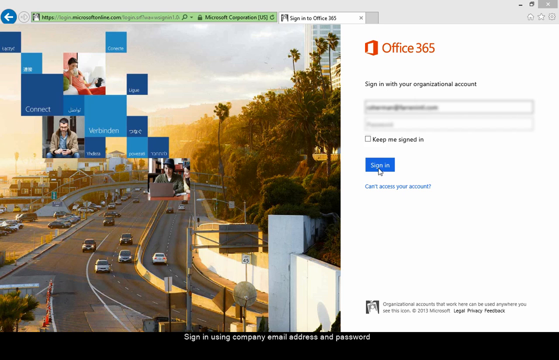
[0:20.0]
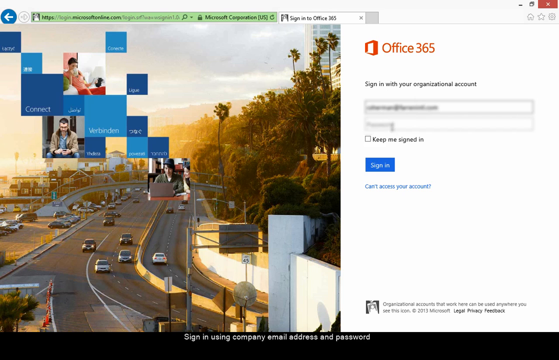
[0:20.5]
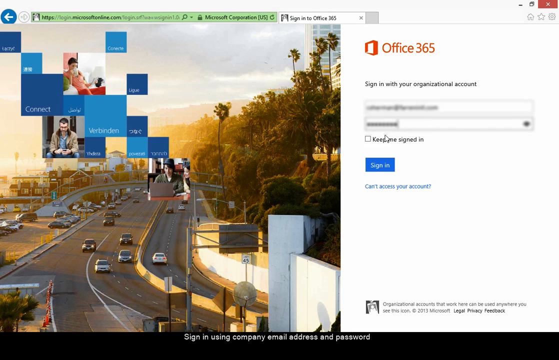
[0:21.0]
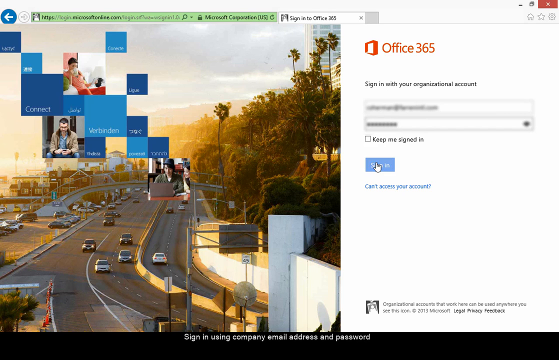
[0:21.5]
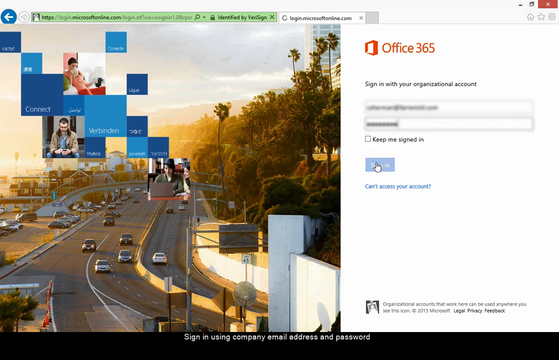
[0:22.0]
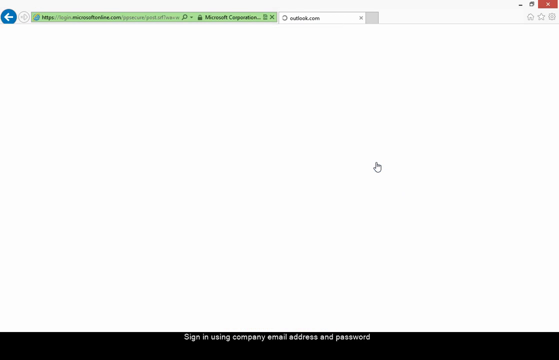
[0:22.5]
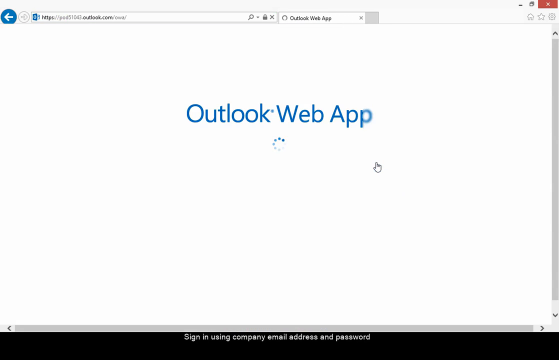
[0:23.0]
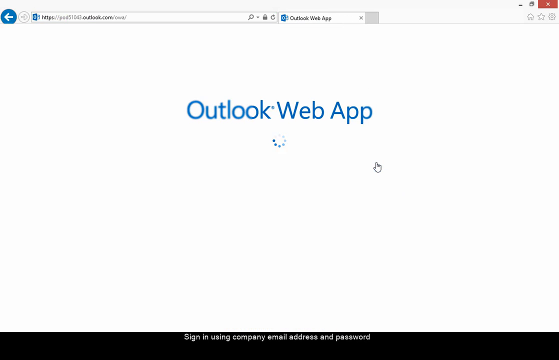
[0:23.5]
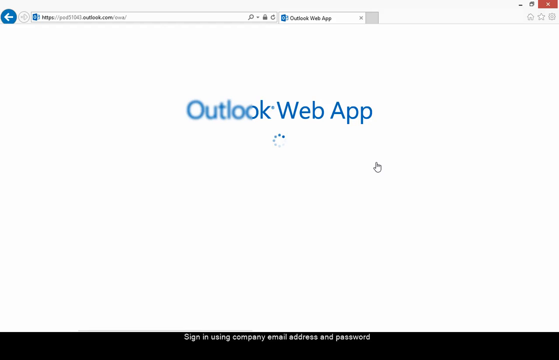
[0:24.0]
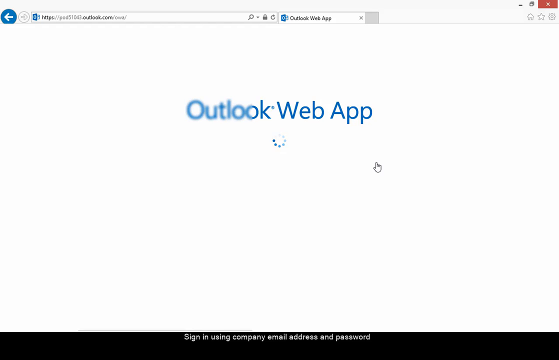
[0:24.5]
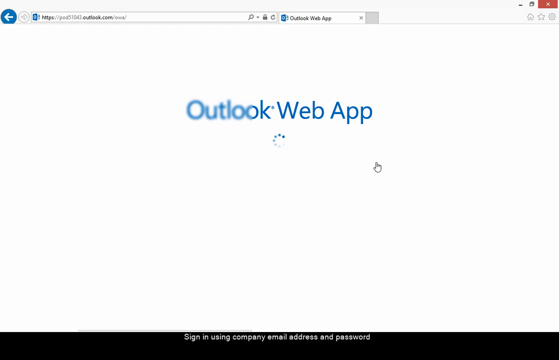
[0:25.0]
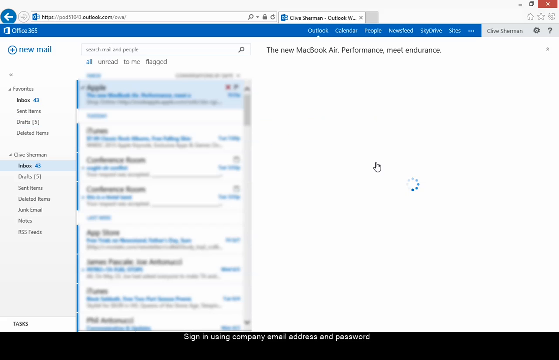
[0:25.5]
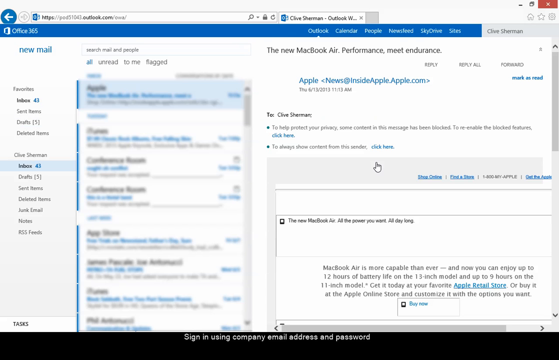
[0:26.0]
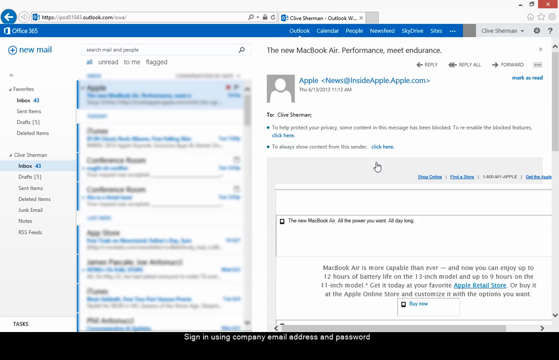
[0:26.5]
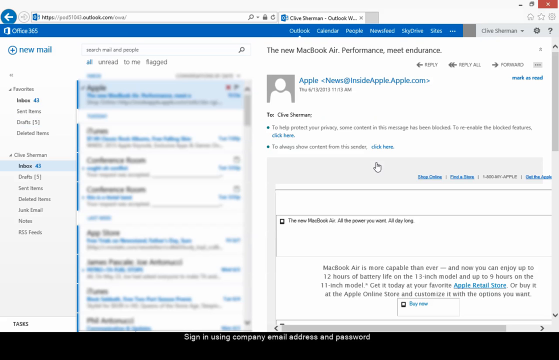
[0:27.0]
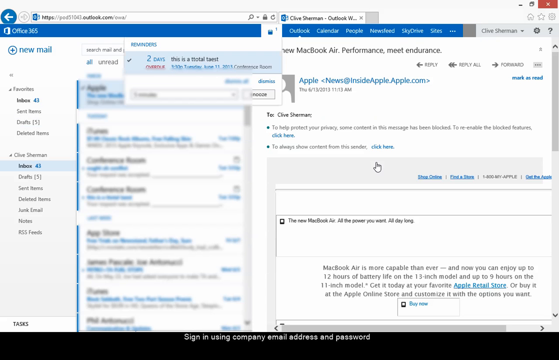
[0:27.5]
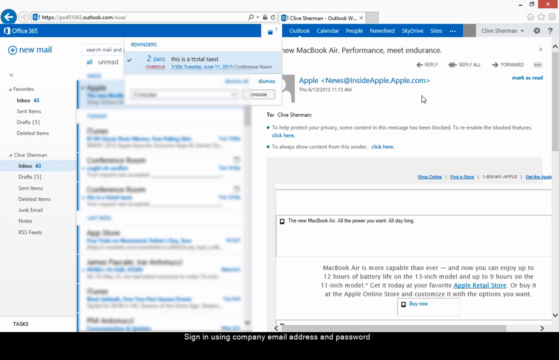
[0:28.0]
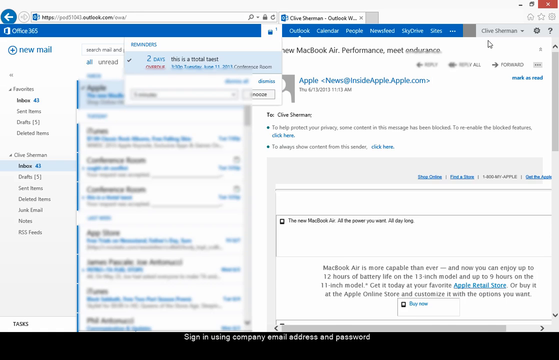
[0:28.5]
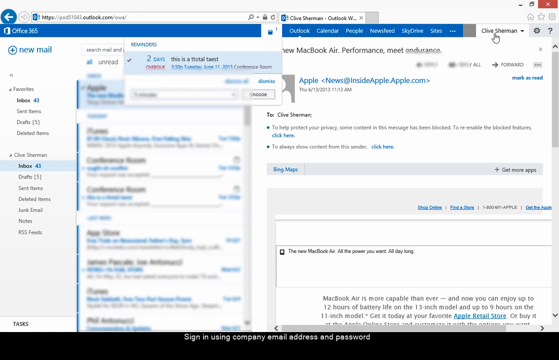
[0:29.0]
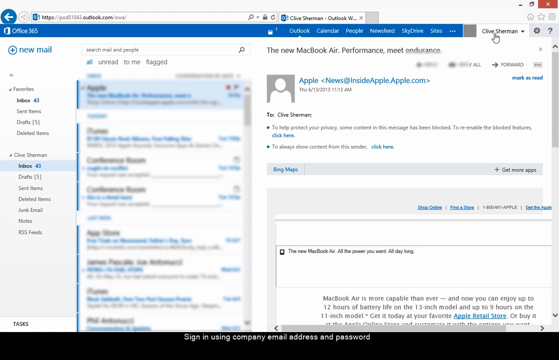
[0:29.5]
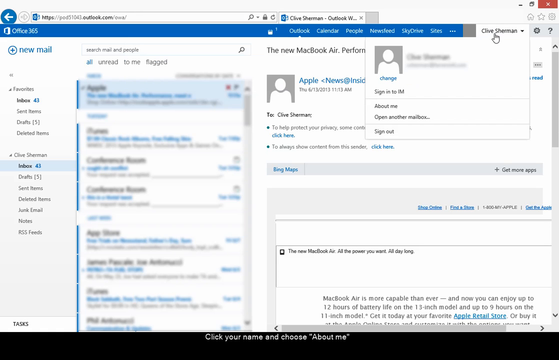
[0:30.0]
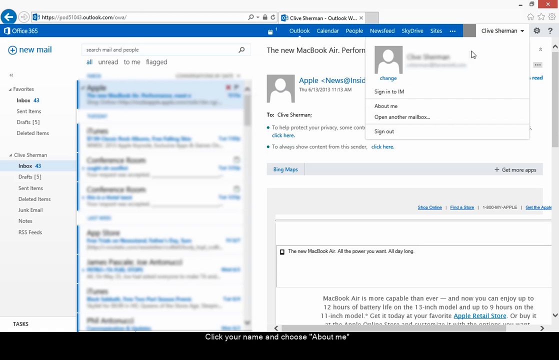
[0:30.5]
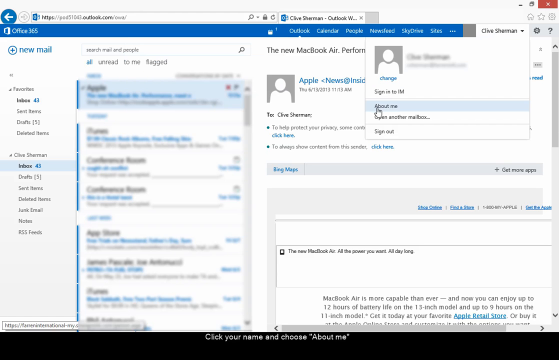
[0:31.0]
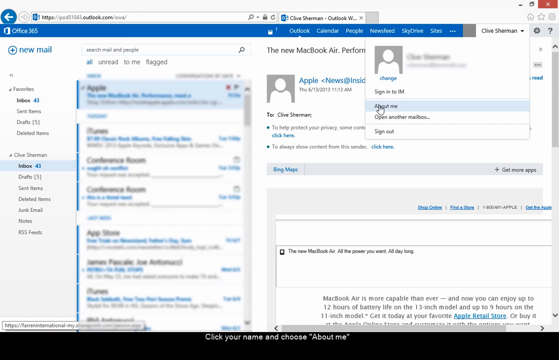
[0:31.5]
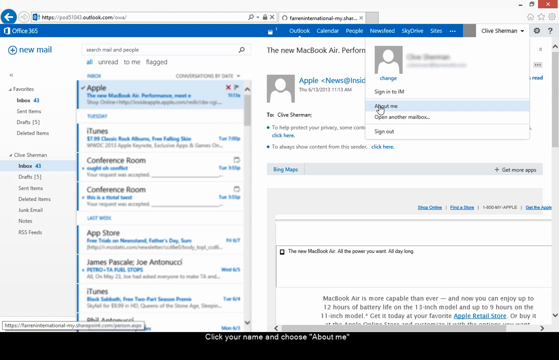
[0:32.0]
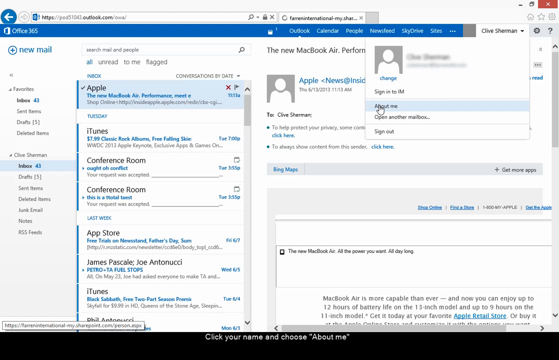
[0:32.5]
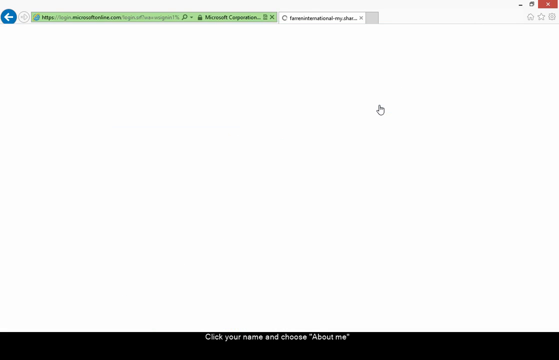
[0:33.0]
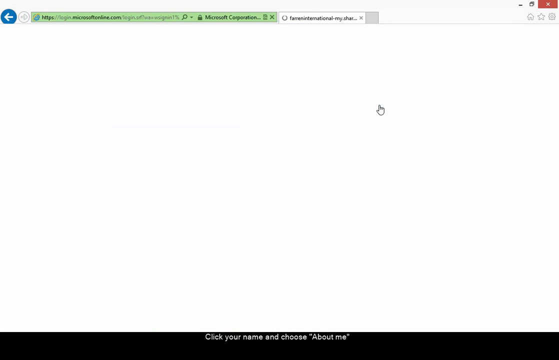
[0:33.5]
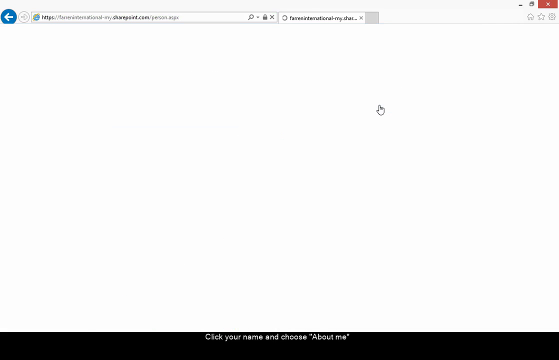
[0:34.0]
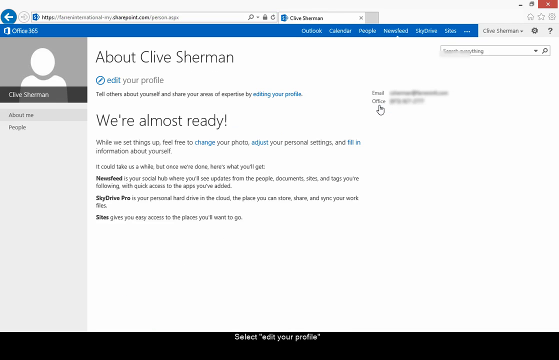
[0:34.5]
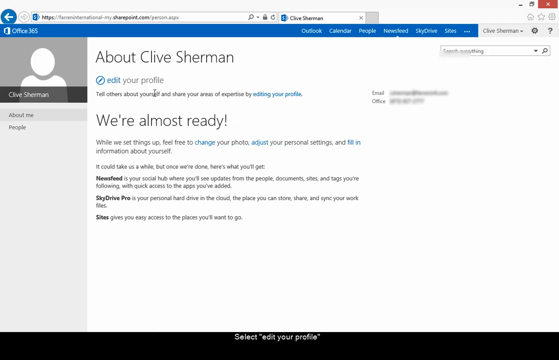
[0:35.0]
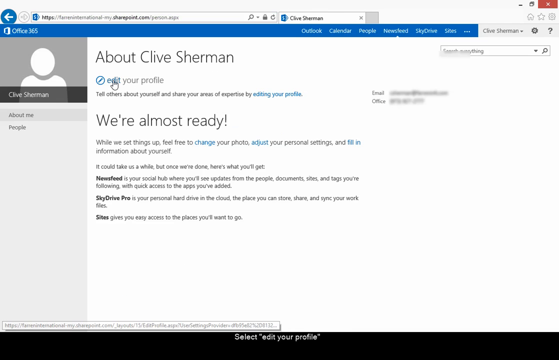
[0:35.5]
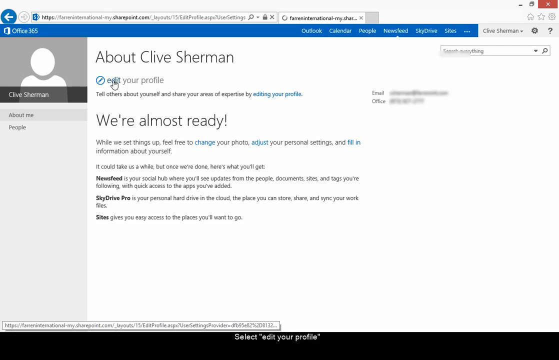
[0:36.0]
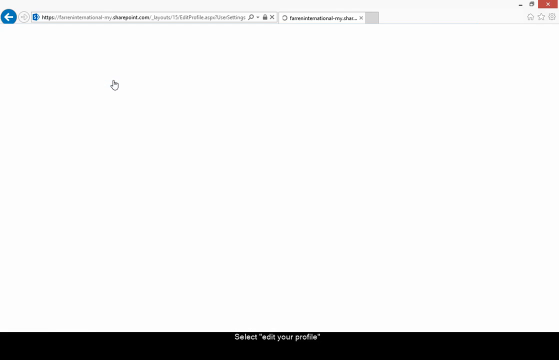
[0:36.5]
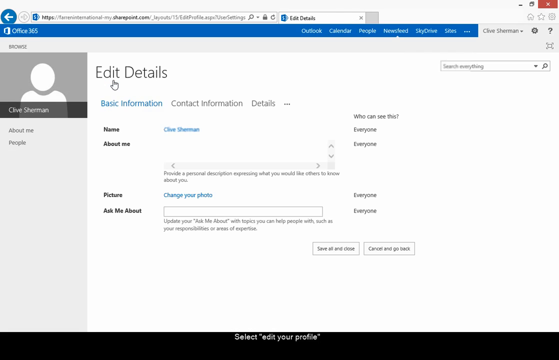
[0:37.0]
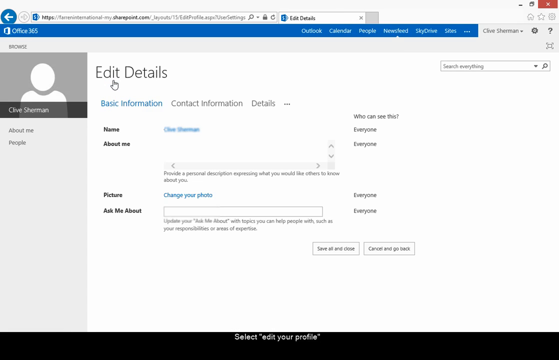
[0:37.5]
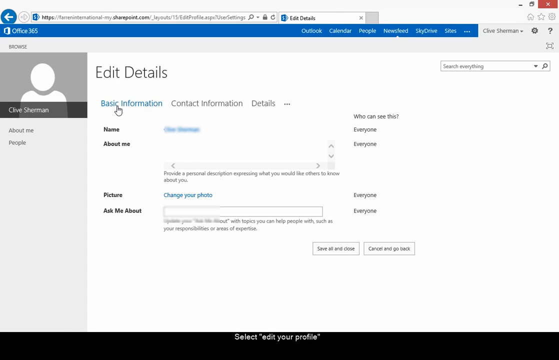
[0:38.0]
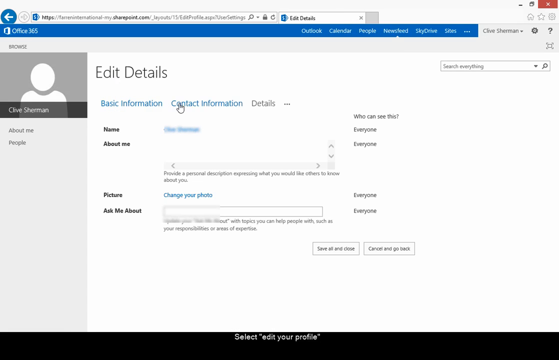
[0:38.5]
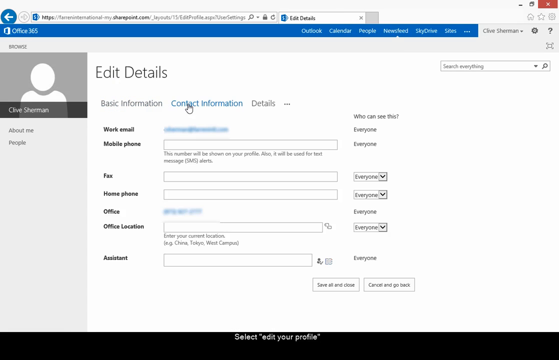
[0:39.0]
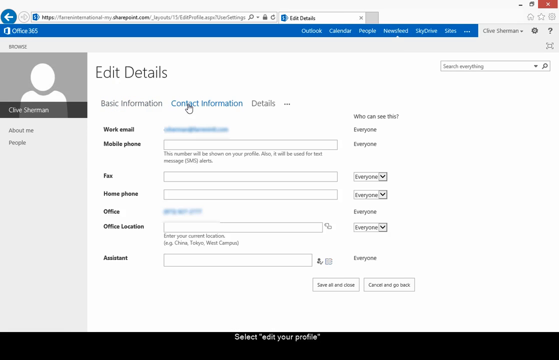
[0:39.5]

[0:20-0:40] With the sign-in credentials and password entered, the user clicks sign in, and the next screen reads "Outlook web app," with a circle spinning and dots as it loads before the email opens. On the left is new mail, and under that are favorites, inbox and the rest of the usual email folders. Next to that is a list of emails, with a search bar above it. On the right side, an email reads "the new Mac Air Performance Meet Endurance"; it looks like an email from Apple about the MacBook Air. The user then seems to move on to updating the profile, which belongs to Clive Sherman. He goes to edit his profile, opening the basic info and then the contact info.